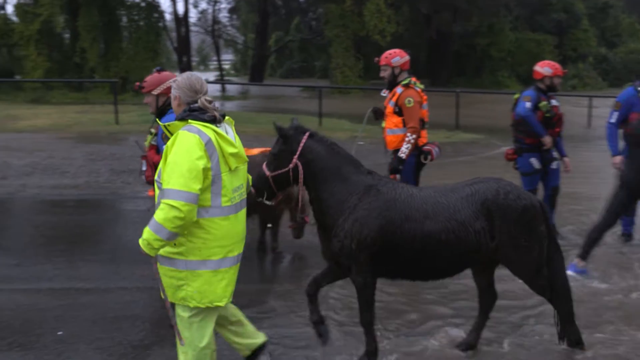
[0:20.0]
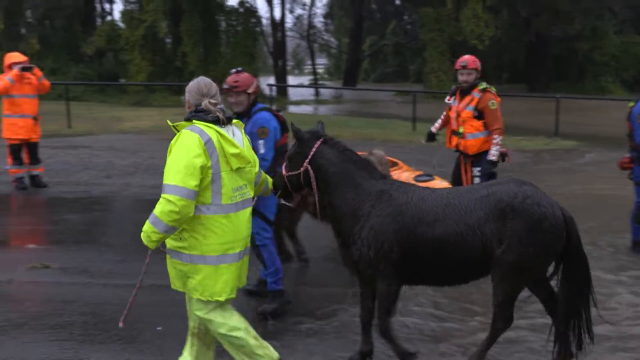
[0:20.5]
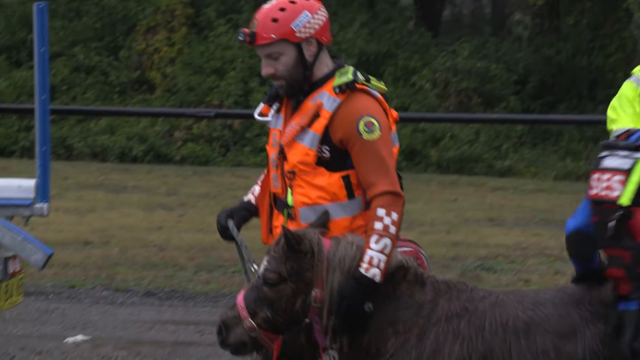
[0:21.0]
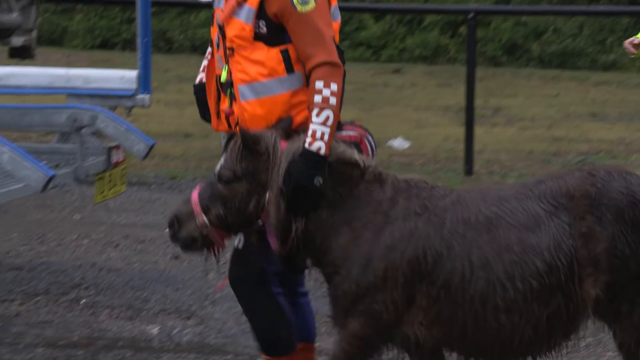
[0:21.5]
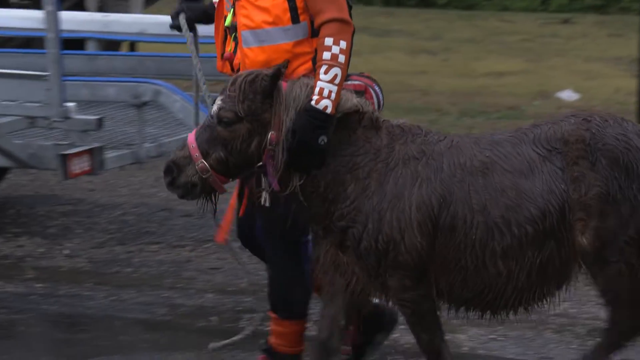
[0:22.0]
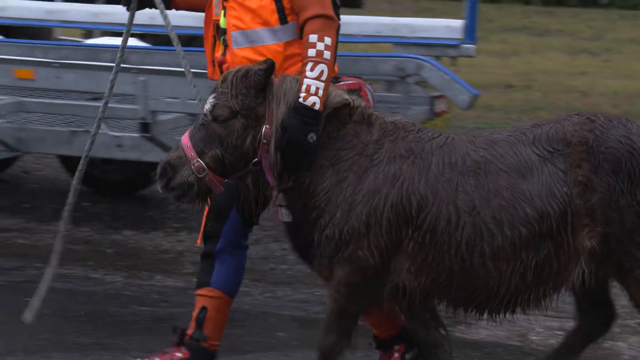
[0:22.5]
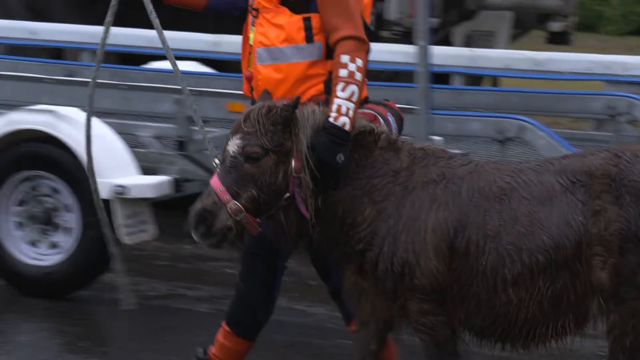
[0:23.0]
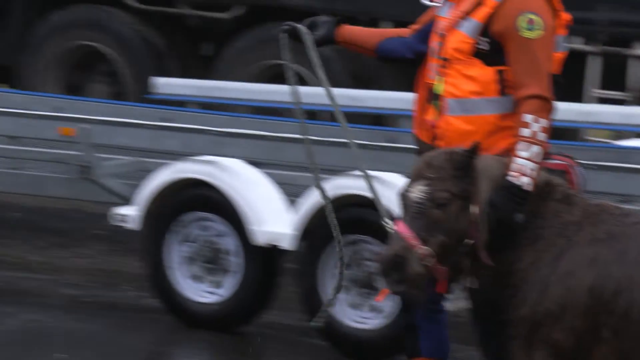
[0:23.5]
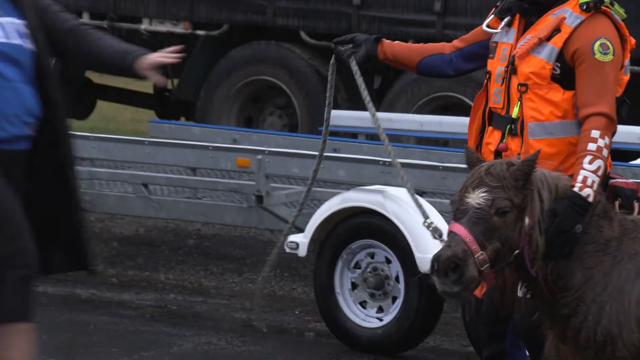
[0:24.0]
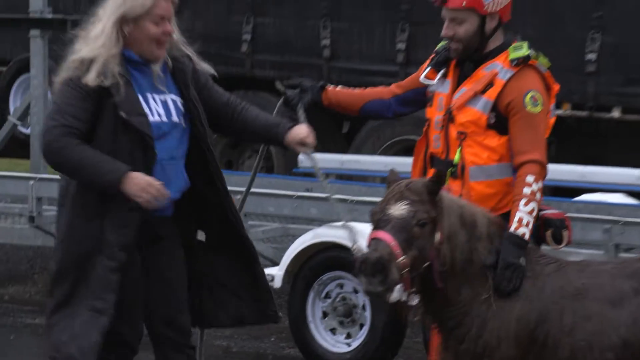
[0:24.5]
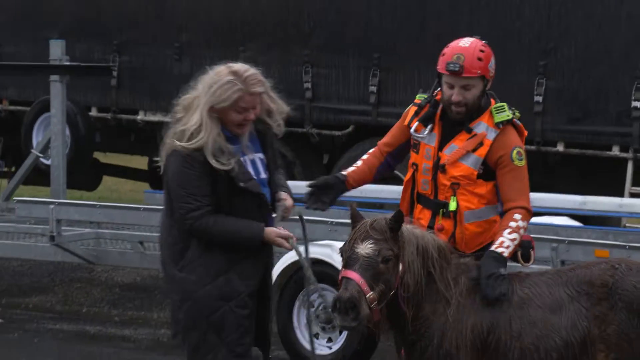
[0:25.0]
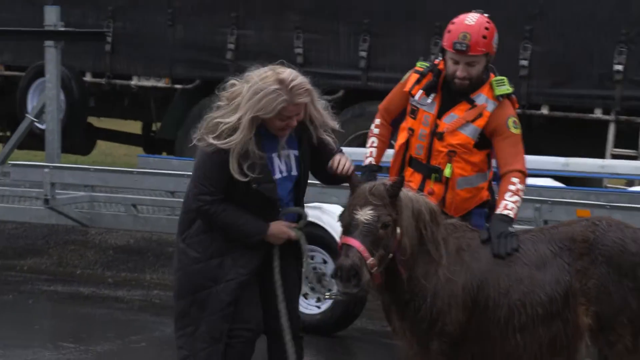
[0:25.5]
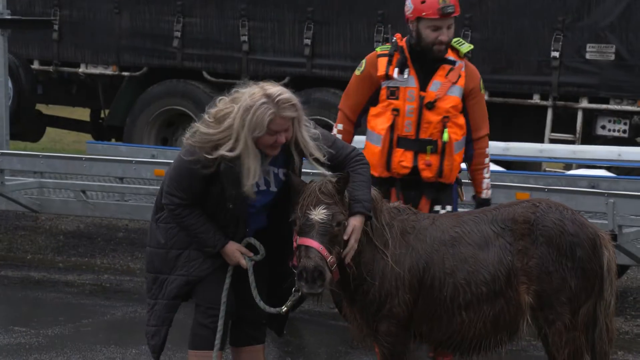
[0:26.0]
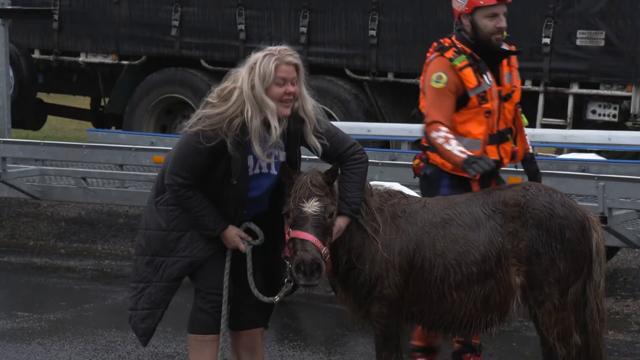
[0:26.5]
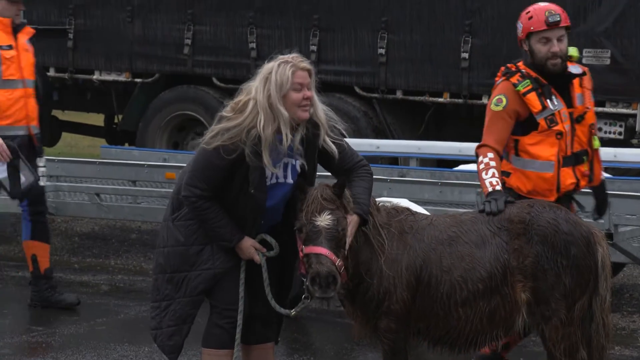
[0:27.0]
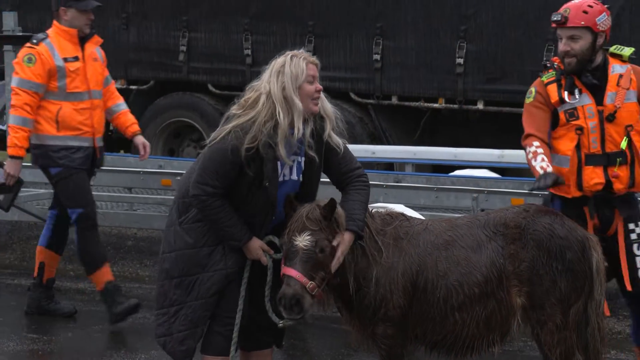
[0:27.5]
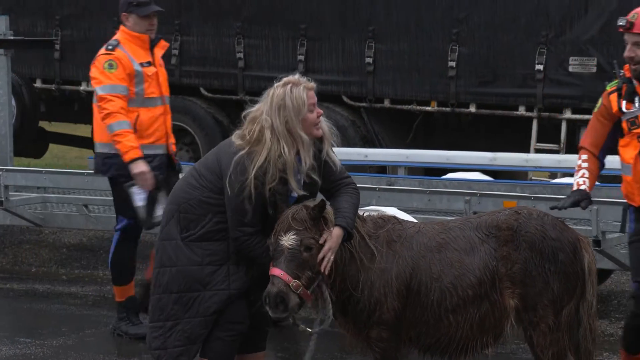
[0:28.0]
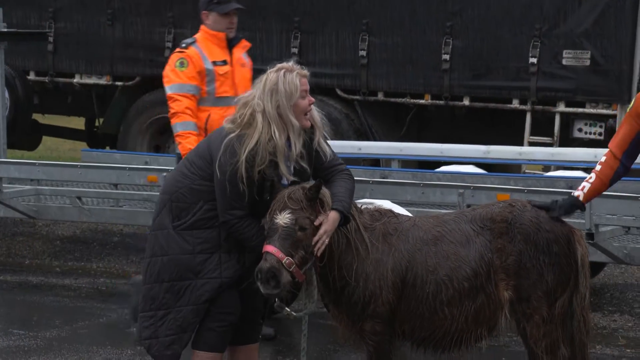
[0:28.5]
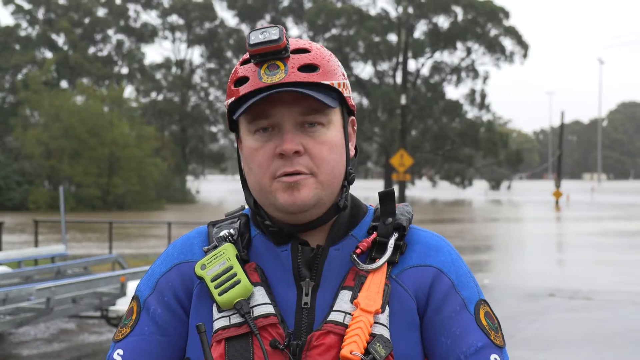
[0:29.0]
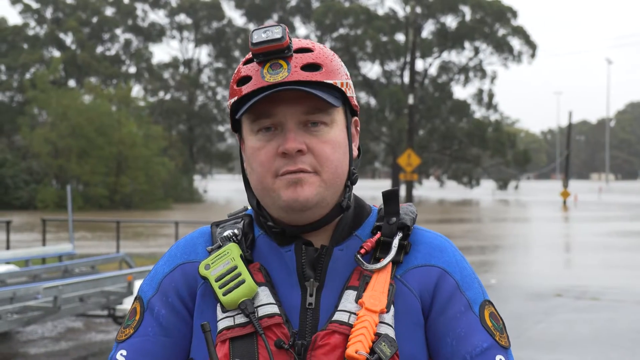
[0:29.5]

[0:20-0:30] The horse and the pony are led to a safer area by men also wearing the same safety gear and are handed off to a woman who looks like either an owner or someone normally responsible for livestock; she seems to know what she is doing. The video cuts back to the man being interviewed in the safety gear. The surroundings are a little clearer: it looks like an overflowing river, with trees and a bank on one side, a river section, and more trees and bank on the other side, which is quite out of focus.